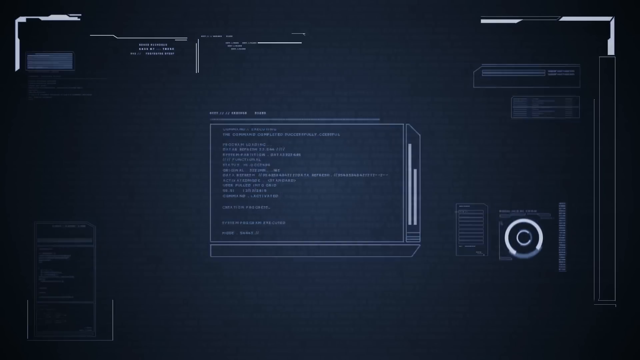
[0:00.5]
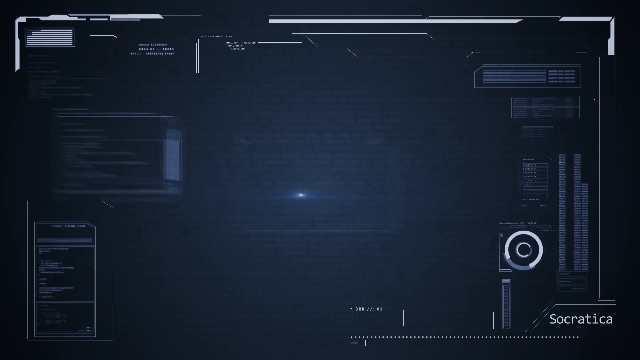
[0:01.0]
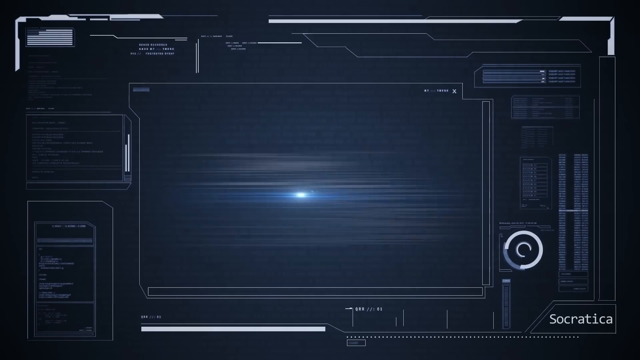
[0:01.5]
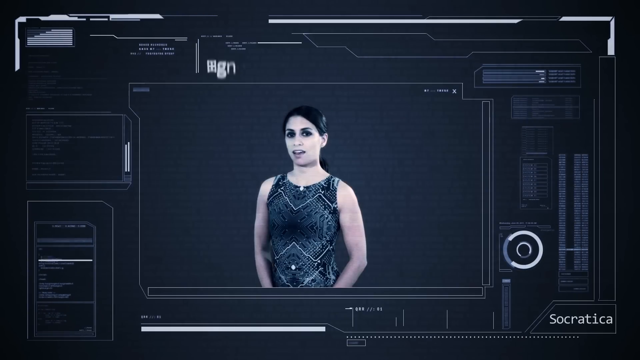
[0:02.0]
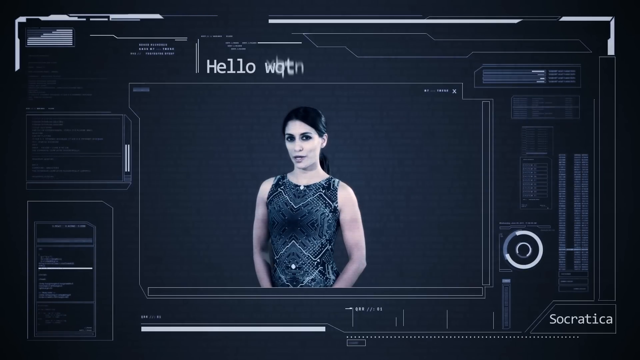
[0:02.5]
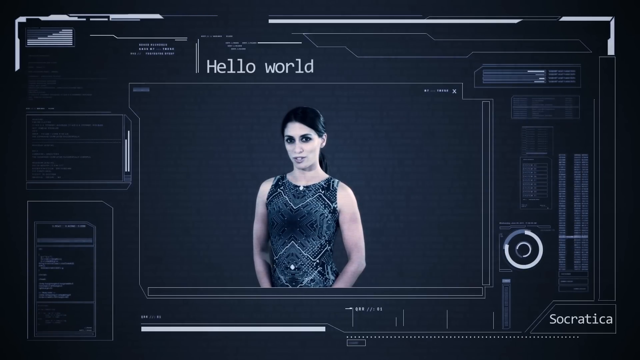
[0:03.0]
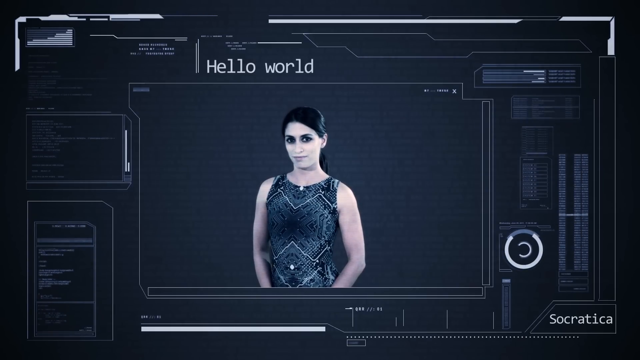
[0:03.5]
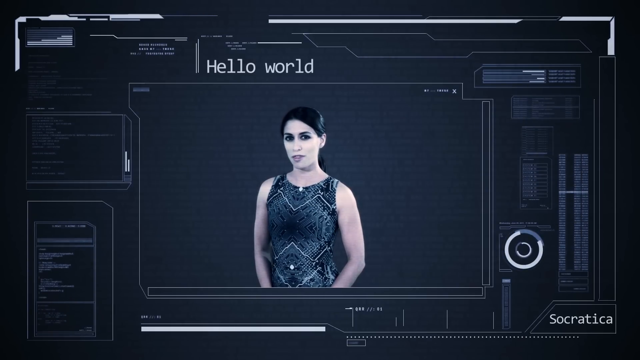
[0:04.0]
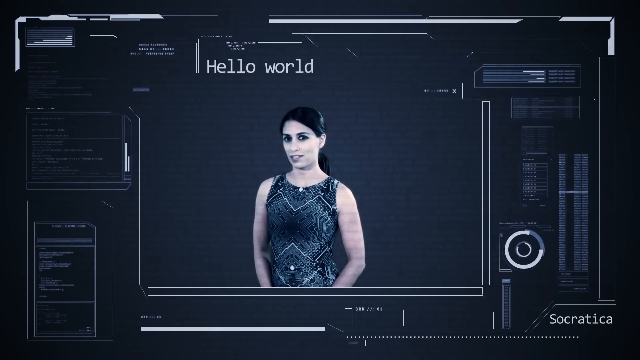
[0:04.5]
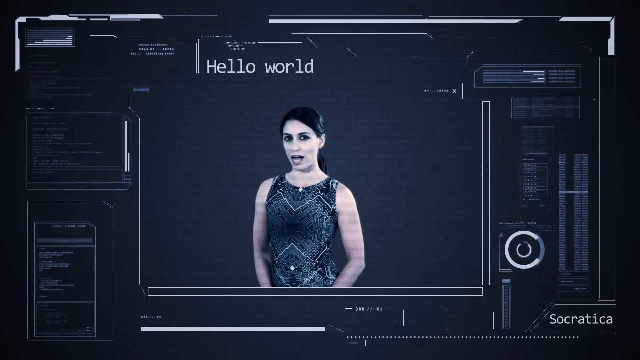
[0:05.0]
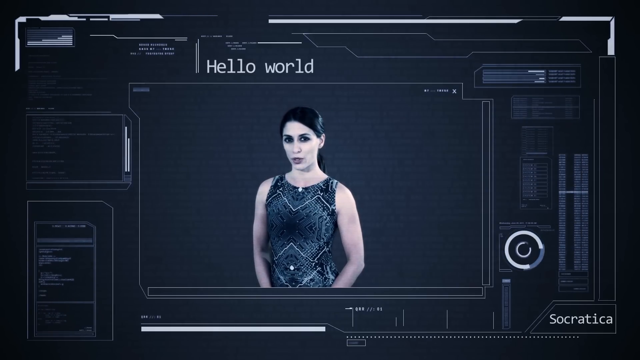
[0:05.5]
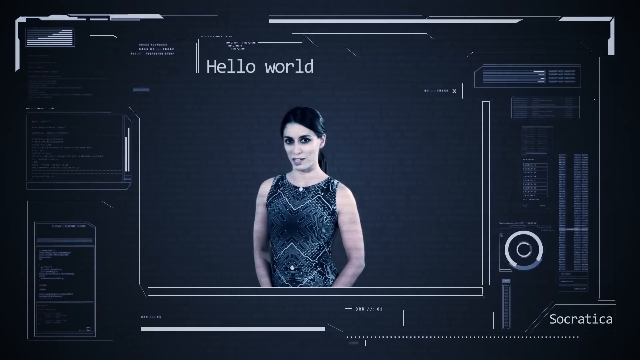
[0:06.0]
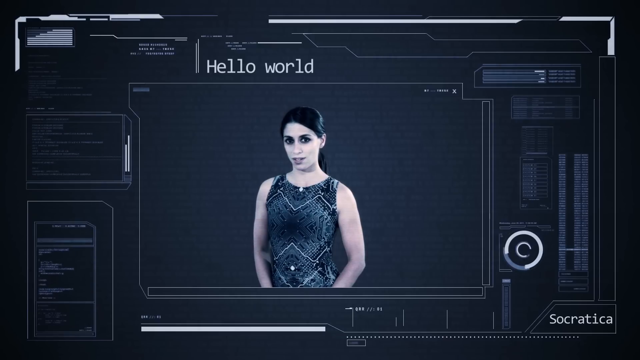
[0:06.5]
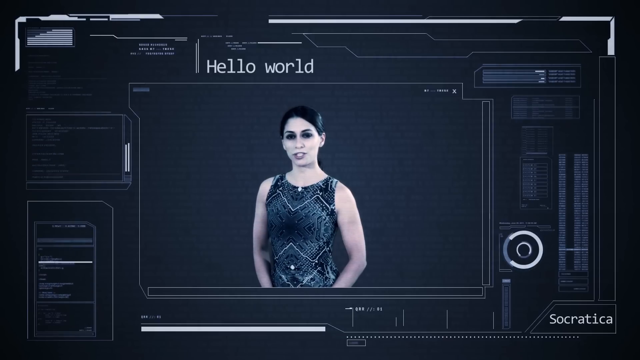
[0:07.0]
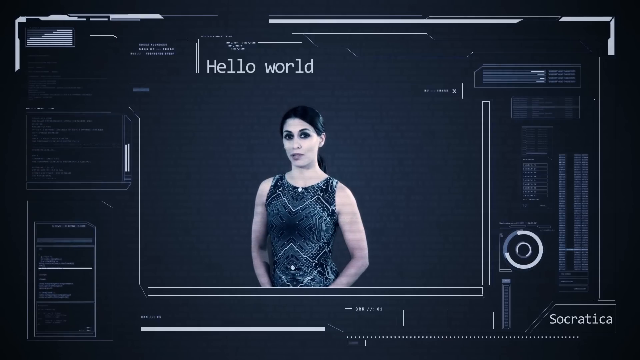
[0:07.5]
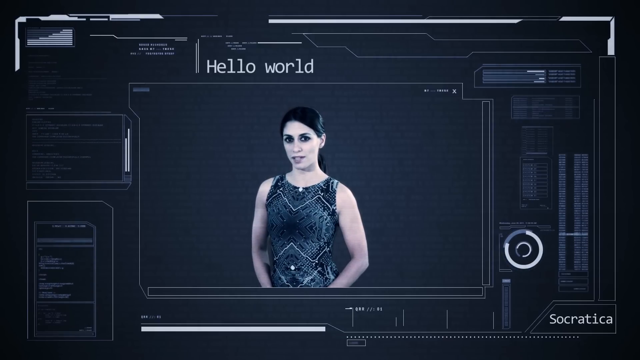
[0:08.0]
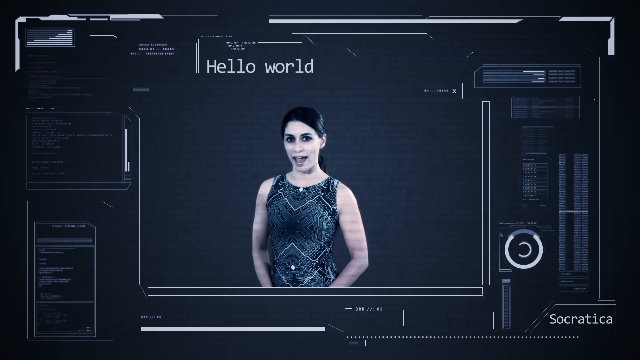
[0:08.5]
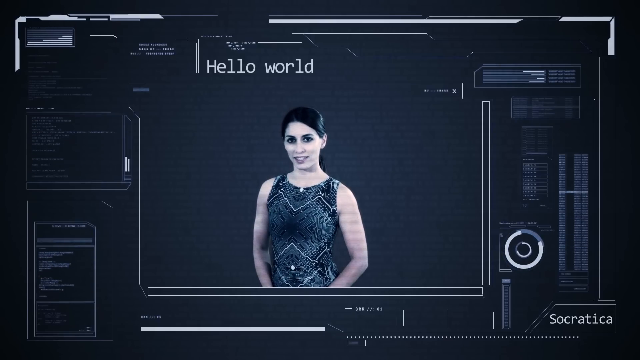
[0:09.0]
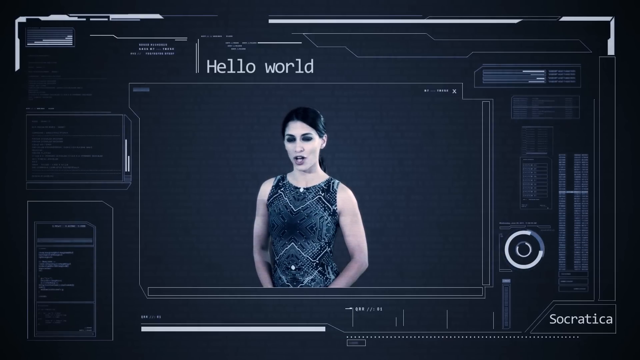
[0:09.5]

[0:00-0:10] The video opens on a technological themed interface: a high-tech display with many different panels and chip-like shapes along the edges and in the background. In the middle is a screen showing a young woman who appears to be about 30, wearing a blue dress and facing the camera. White text appears above her reading "Hello, world". She talks to the camera with her hands at her sides and does not move. Along the edge panels there are animations and movement, such as scrolling text.